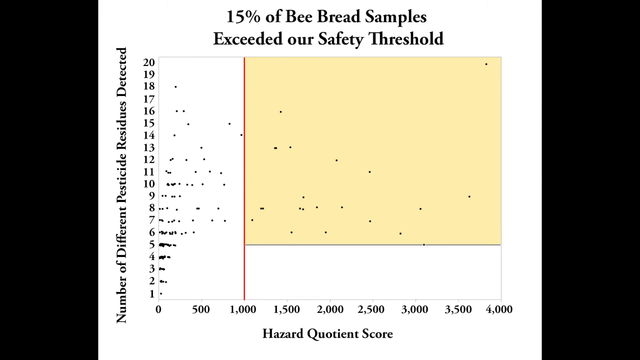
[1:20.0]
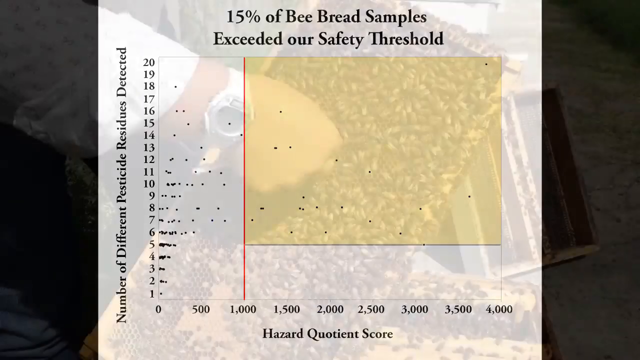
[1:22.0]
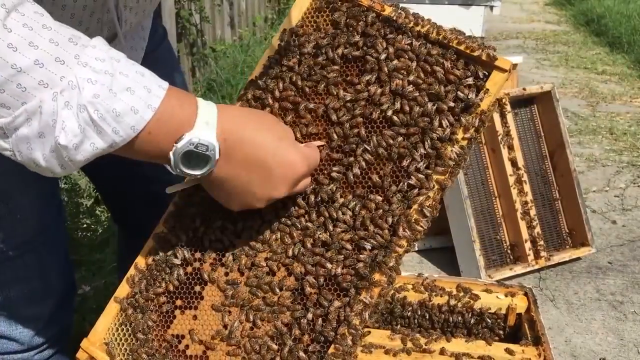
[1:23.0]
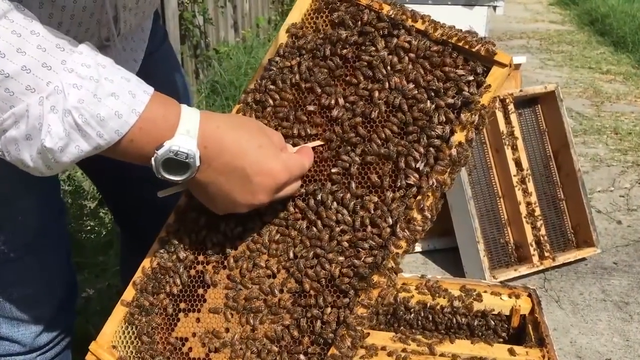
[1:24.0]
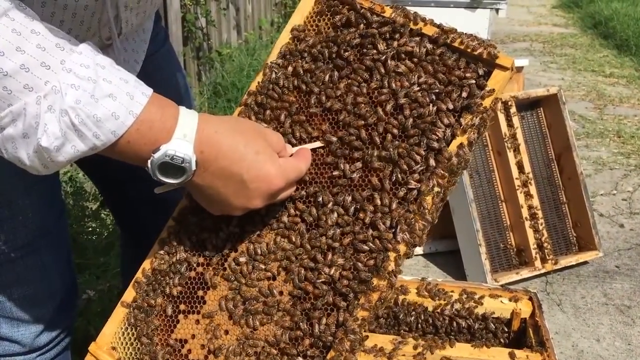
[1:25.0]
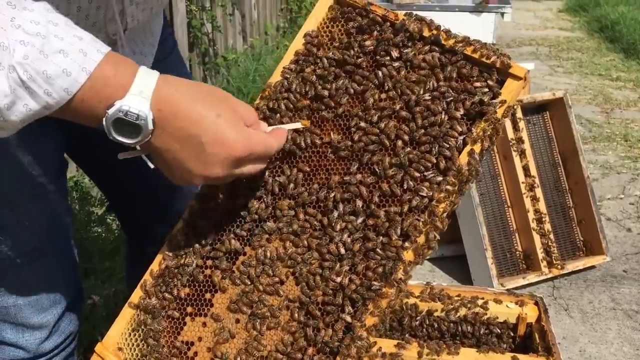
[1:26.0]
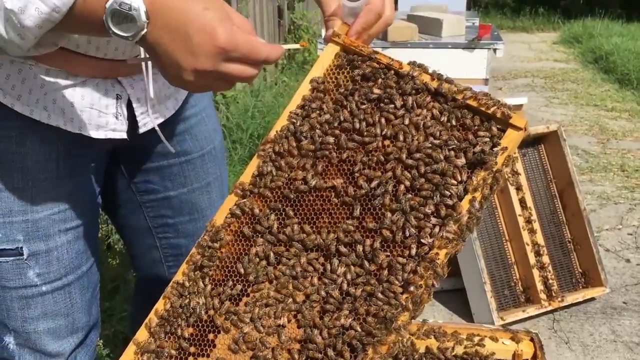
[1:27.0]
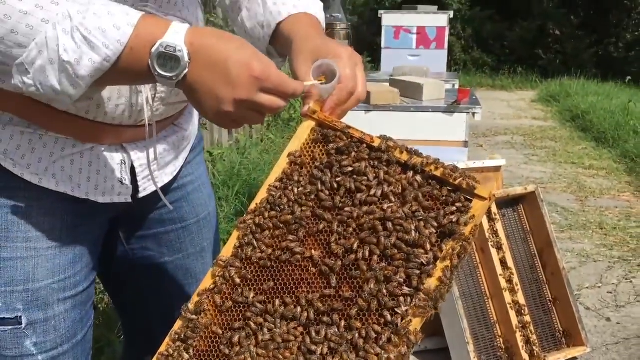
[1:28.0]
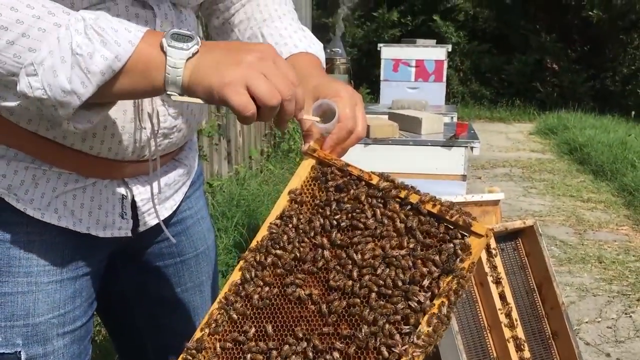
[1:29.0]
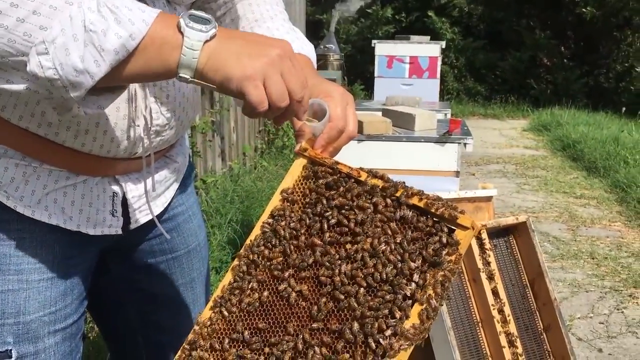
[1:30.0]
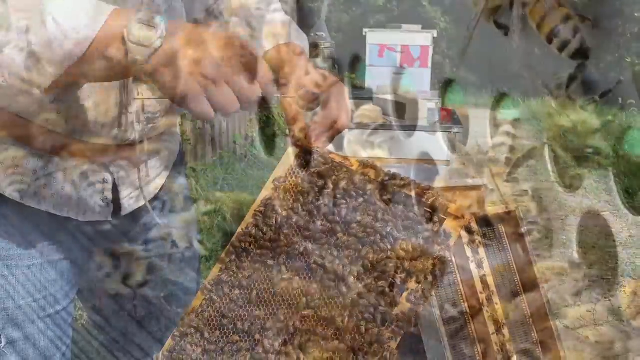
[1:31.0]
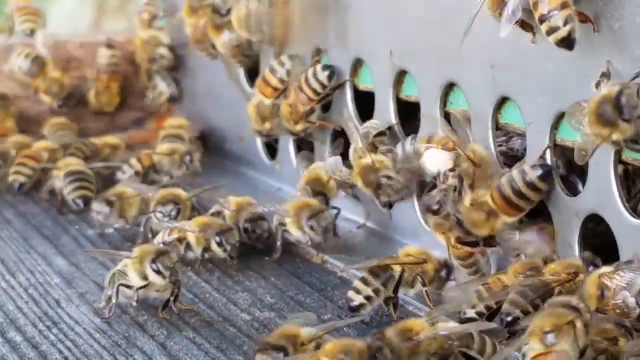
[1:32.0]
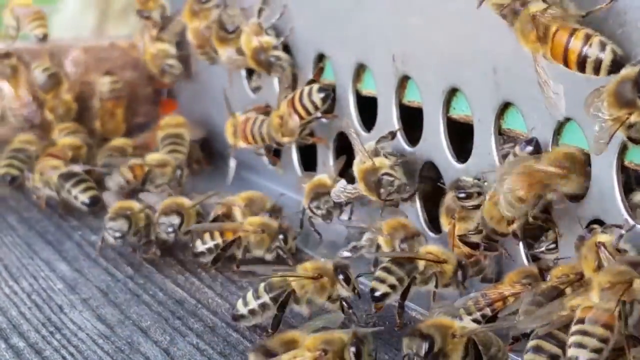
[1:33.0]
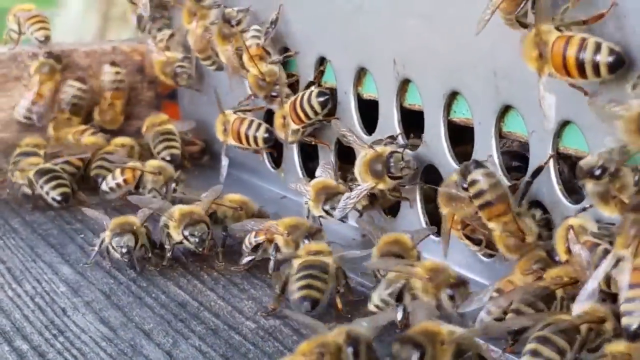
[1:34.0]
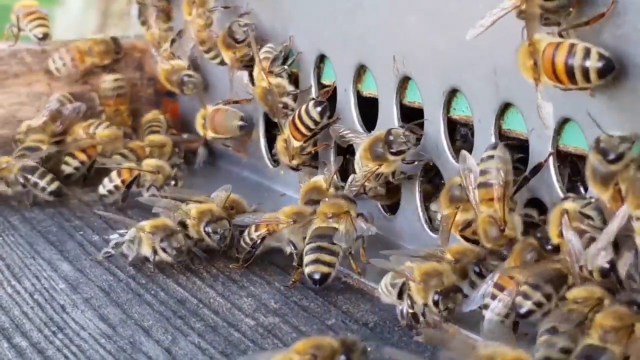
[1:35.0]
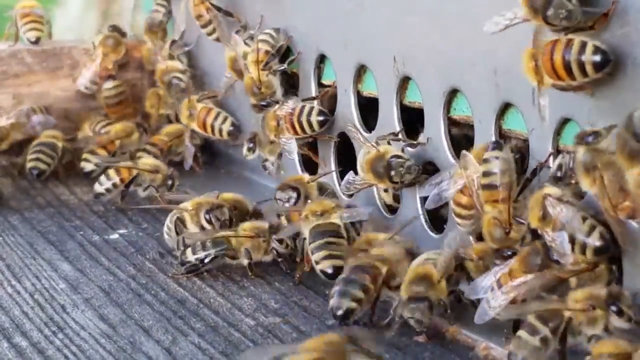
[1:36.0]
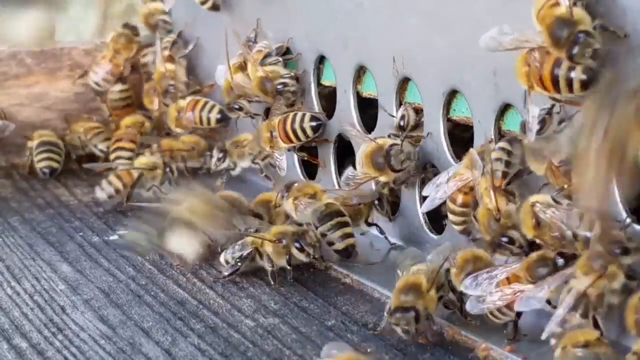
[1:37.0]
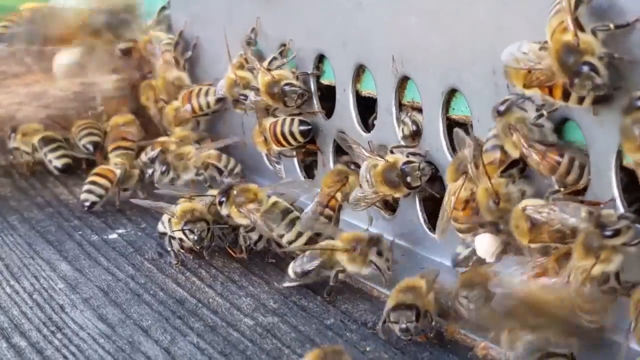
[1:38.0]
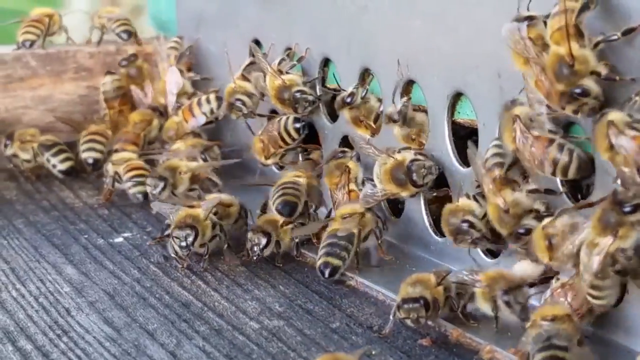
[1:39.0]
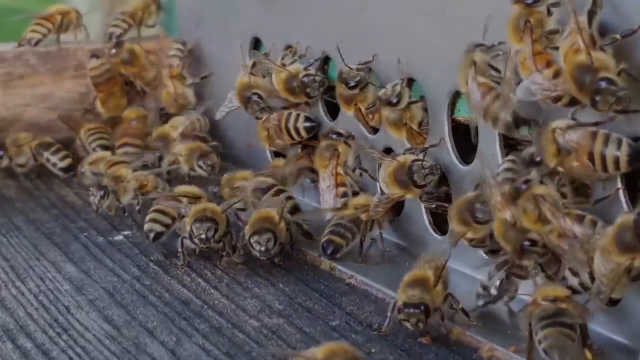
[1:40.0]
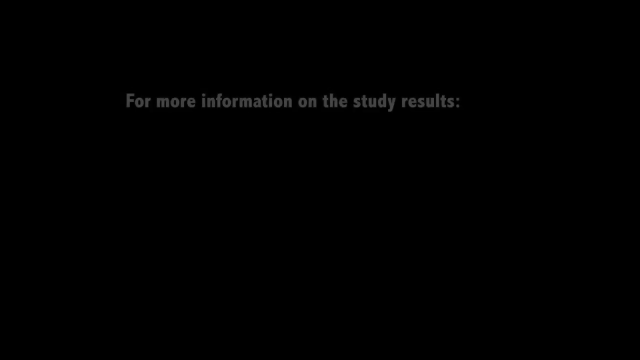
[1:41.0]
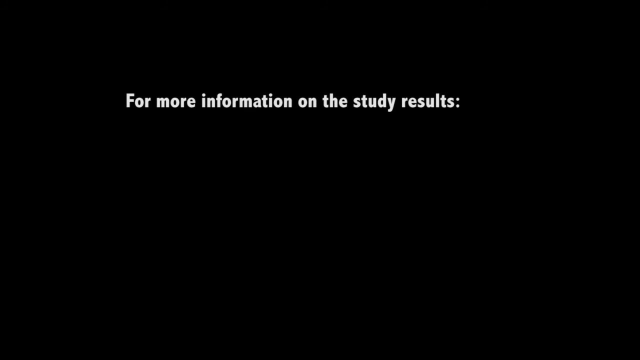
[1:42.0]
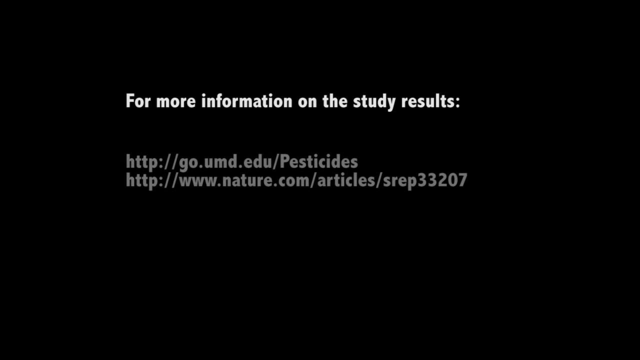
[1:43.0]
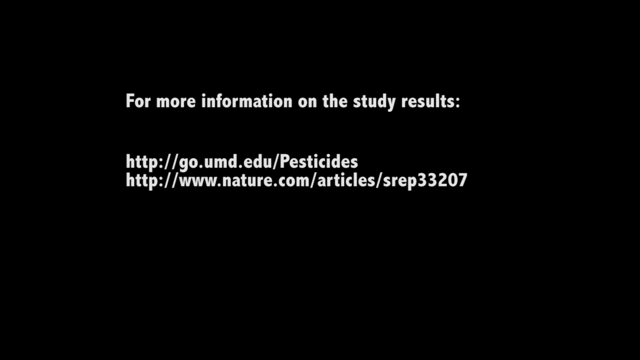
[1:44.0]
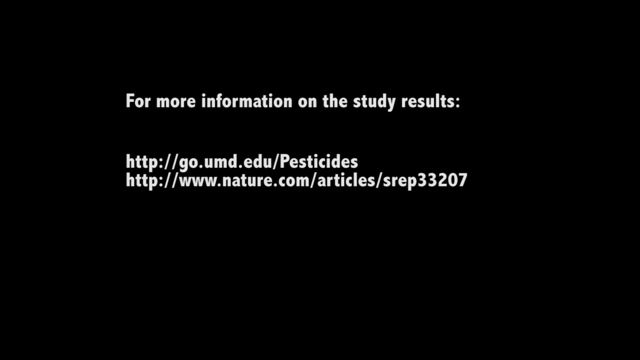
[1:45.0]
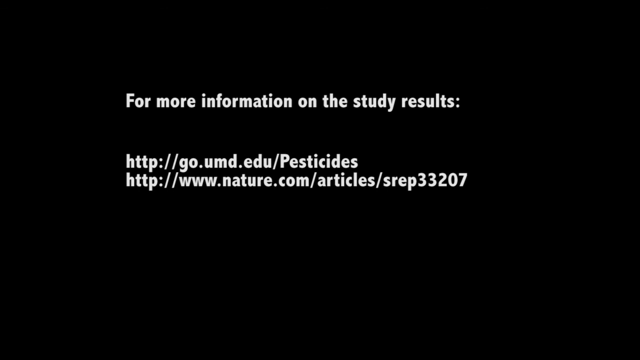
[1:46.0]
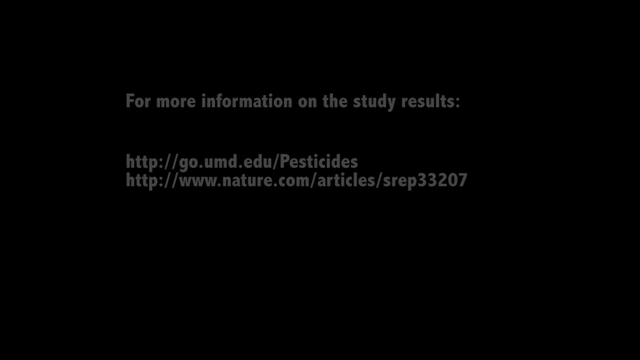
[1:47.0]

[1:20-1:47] A beekeeper uses a wooden dowel to dig in and remove honey from a flat piece of wood inside an artificial bee home, then puts the honey inside a pipe. The view changes to many yellow-and-black bees going through holes in a flat piece of metal on the right part of the screen; they seem to be touching and standing close to each other. White text on a black background then reads "for more information on the study results" and gives two URLs for the study results on pesticides and bee environments.